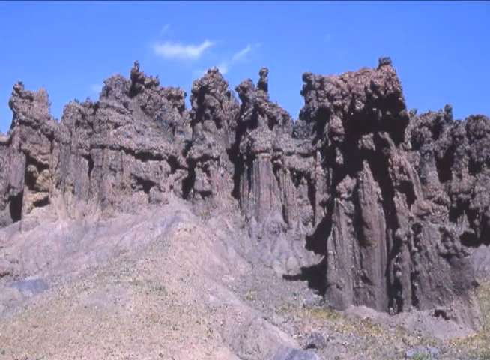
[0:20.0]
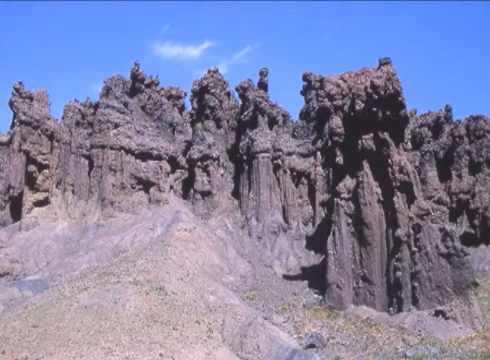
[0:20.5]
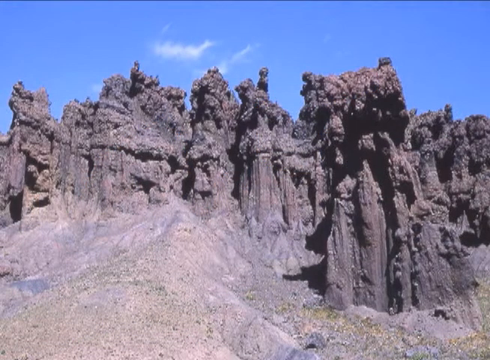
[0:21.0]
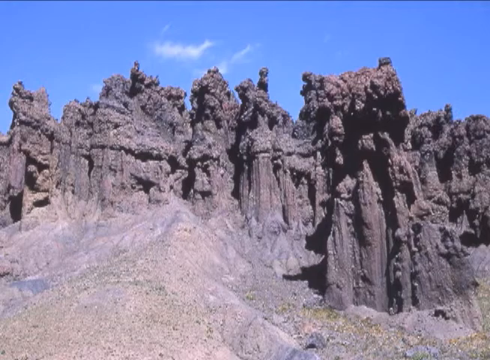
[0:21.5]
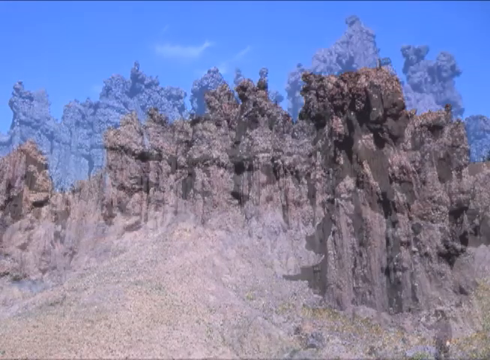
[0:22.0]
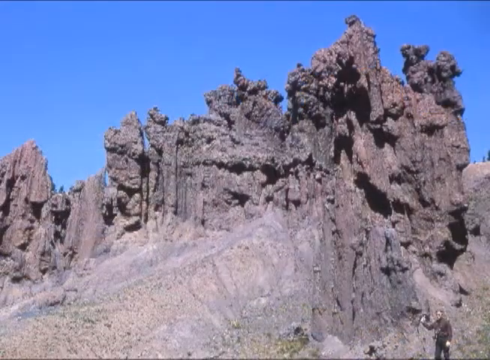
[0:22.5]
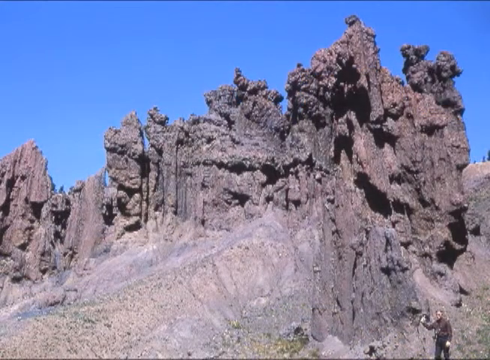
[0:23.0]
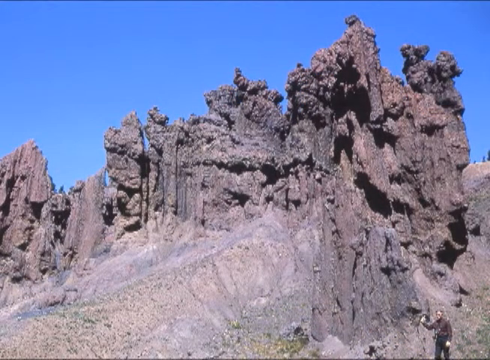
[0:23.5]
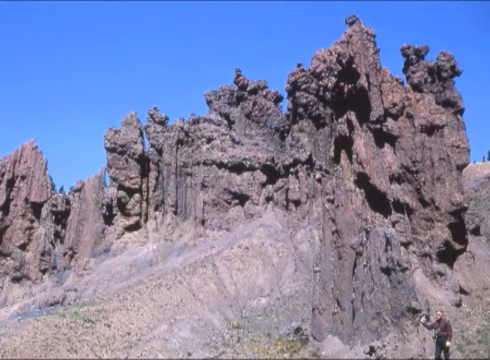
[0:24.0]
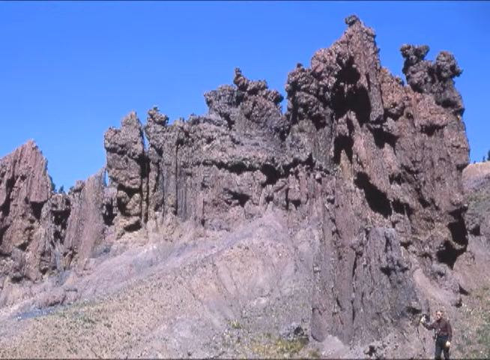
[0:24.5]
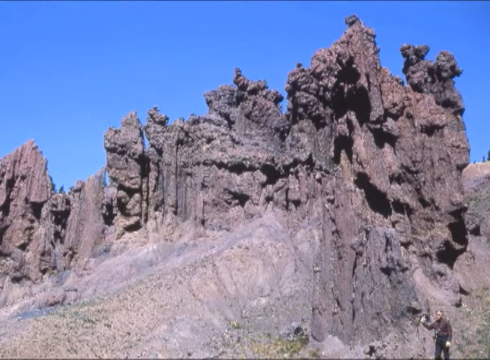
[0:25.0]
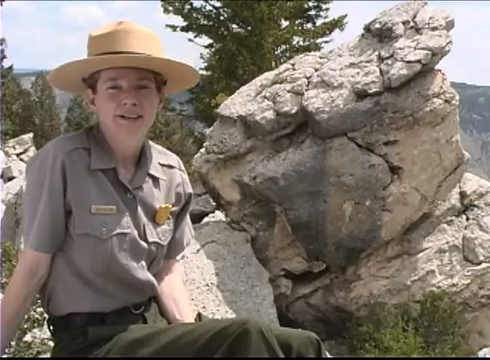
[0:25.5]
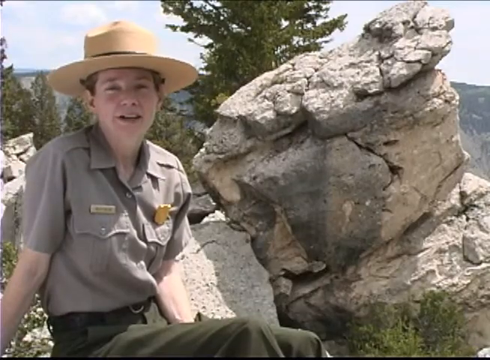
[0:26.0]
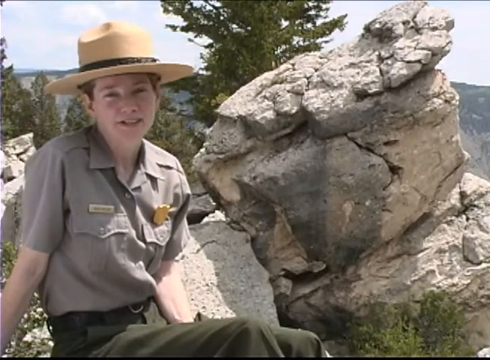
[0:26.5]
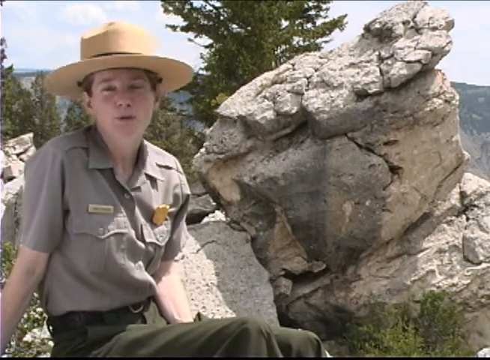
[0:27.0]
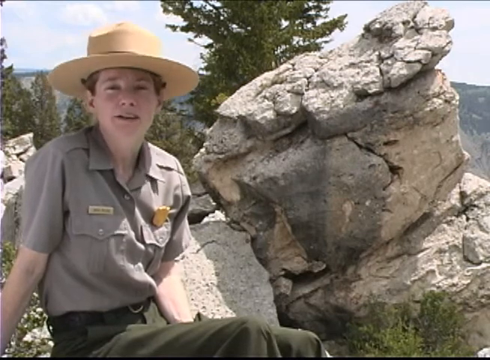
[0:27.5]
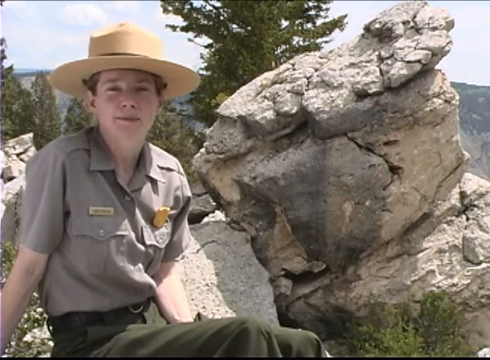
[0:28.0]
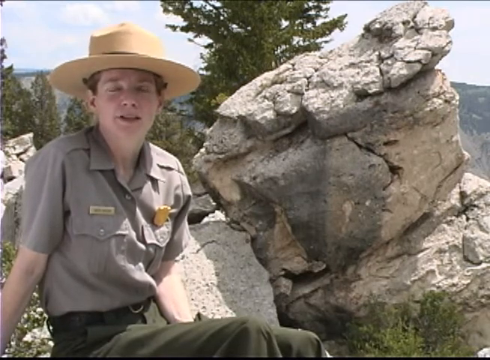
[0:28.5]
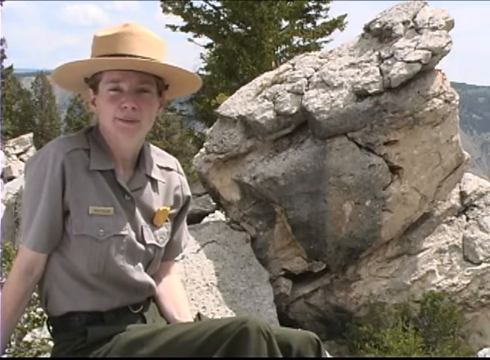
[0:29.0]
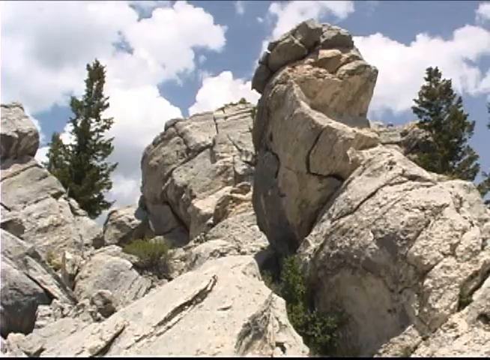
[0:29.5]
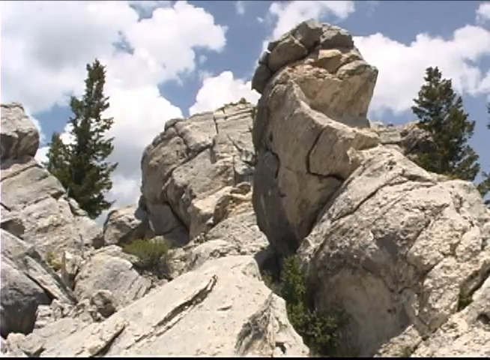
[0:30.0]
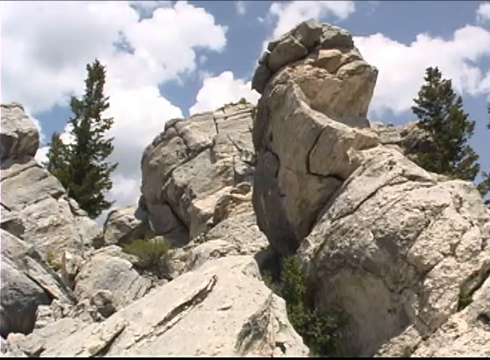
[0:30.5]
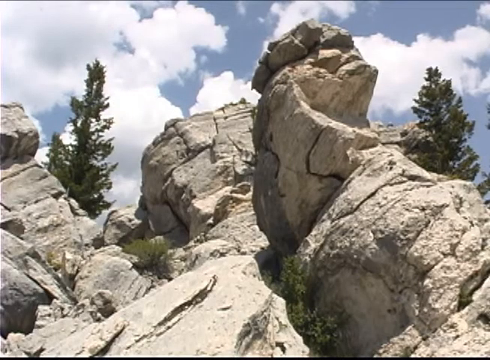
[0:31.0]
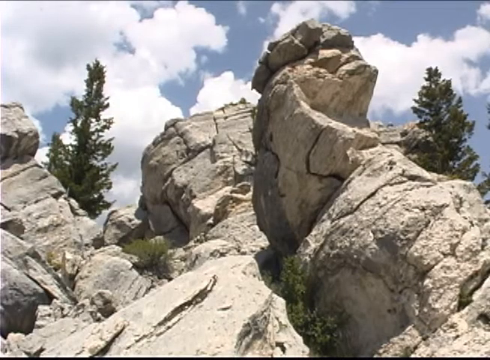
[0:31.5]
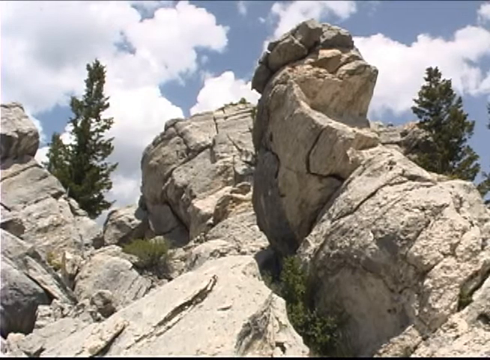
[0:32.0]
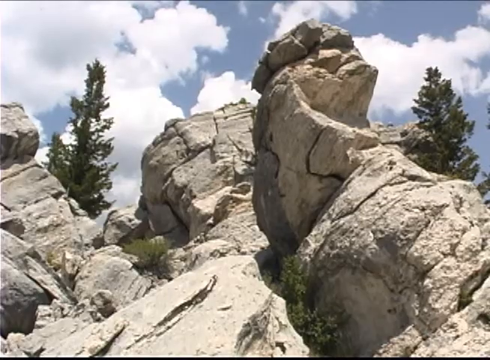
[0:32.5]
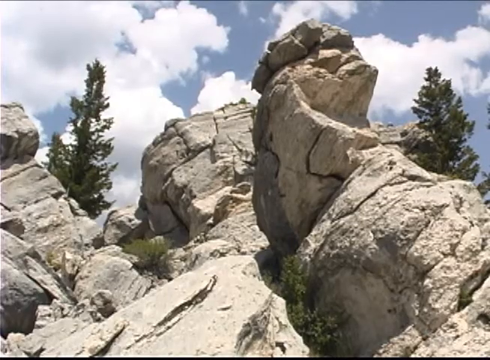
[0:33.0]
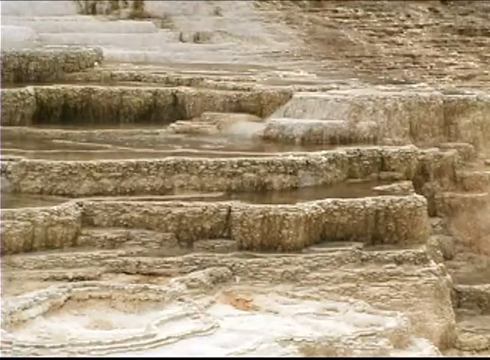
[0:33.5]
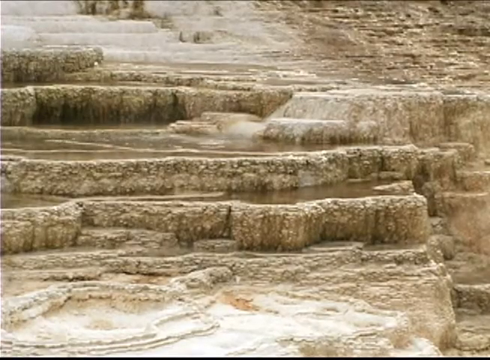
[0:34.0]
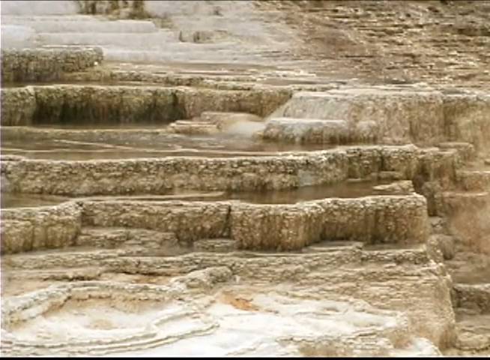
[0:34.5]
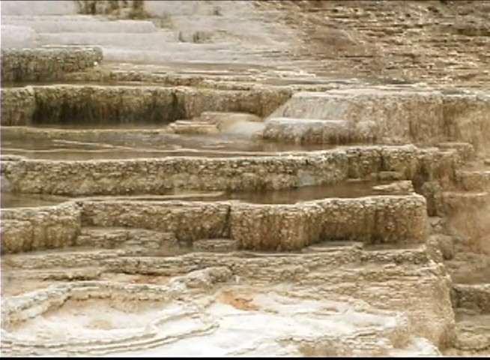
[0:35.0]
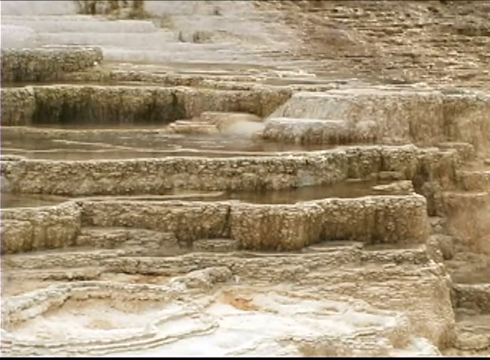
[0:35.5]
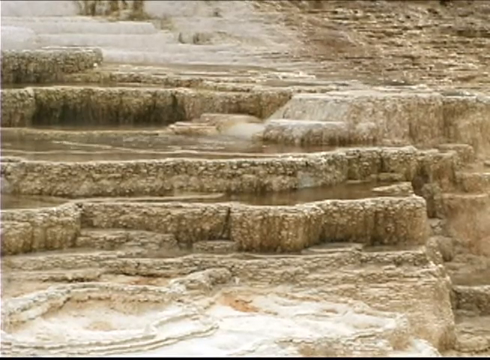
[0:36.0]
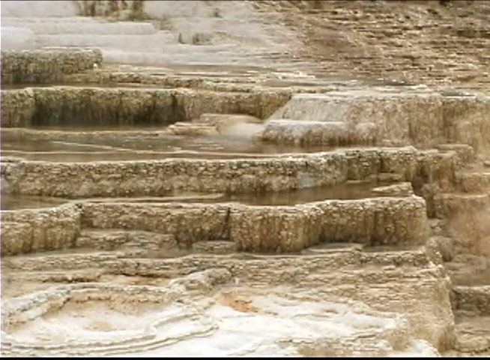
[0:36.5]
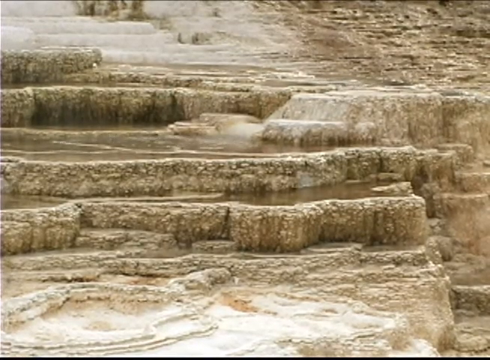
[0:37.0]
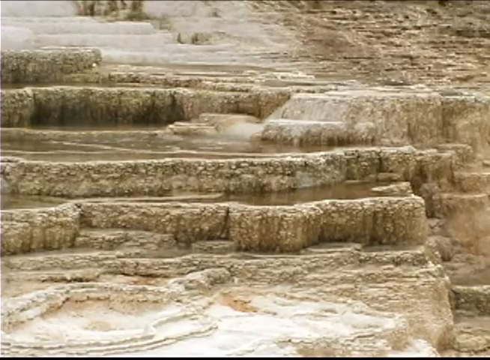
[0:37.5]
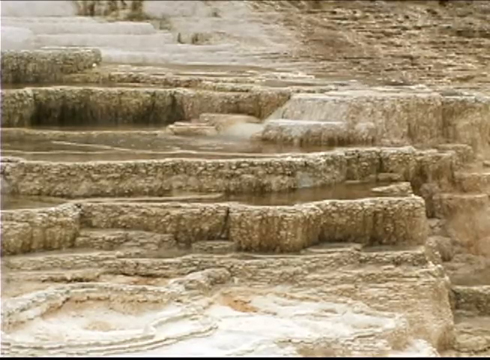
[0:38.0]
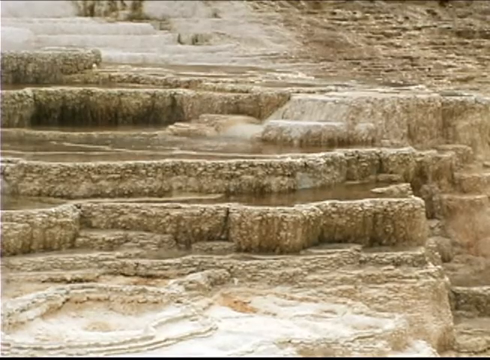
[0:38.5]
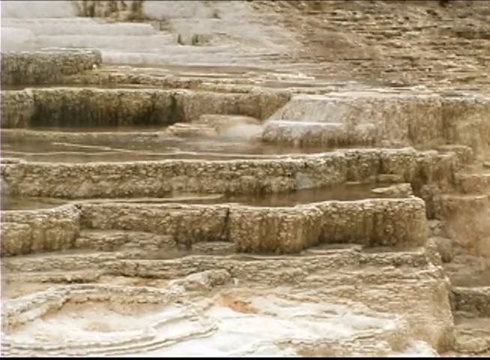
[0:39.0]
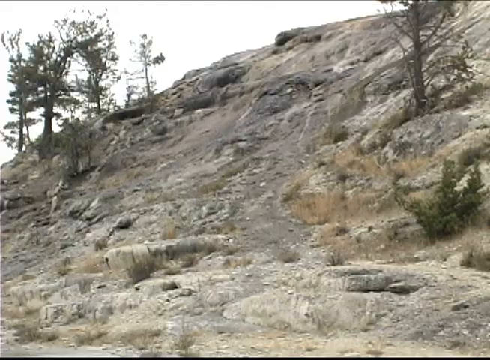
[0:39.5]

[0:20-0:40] It seems as though someone has drawn the hills, possibly as an architectural design. The hills are very small, each with its own shape, like being in sand. There is also a water canal, with water coming from the hill. It is a hill area, and the color of the hills is black.